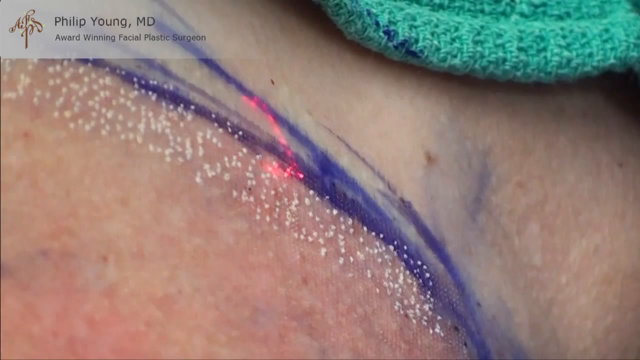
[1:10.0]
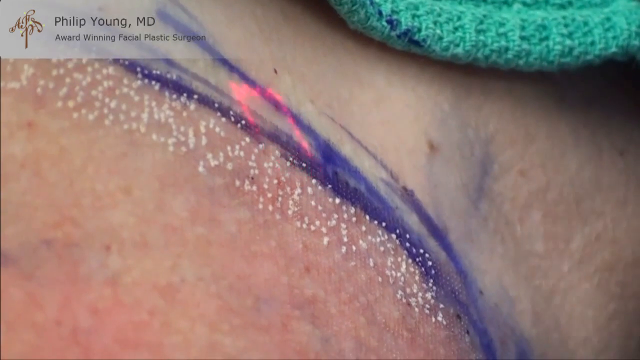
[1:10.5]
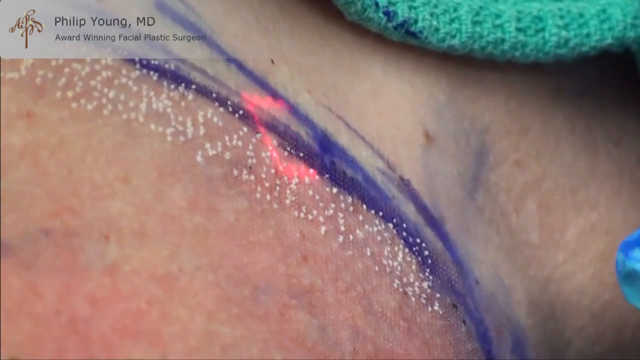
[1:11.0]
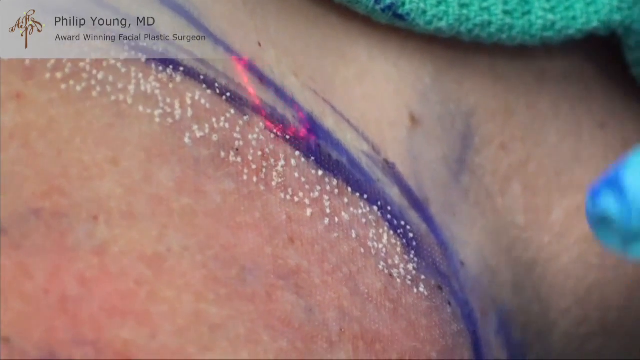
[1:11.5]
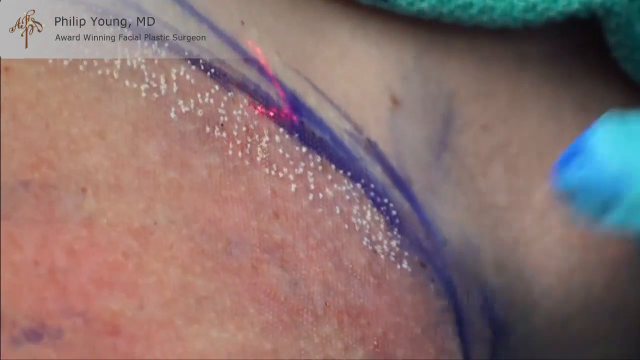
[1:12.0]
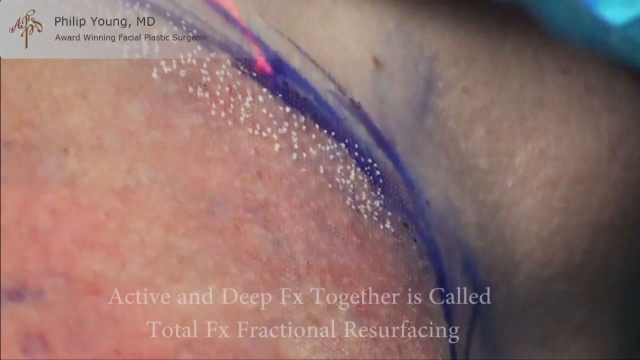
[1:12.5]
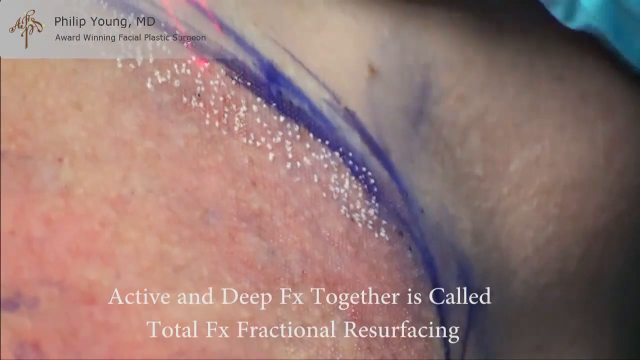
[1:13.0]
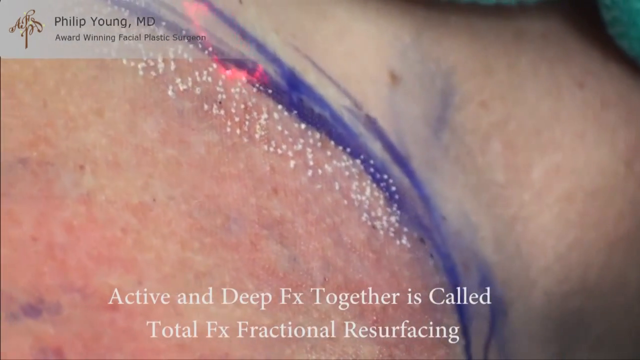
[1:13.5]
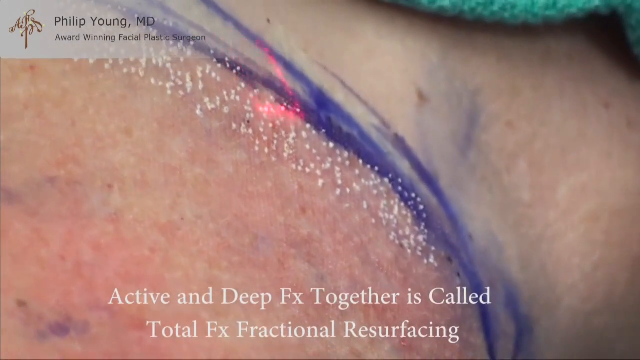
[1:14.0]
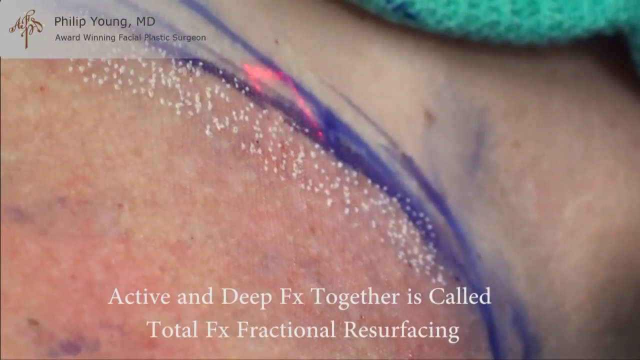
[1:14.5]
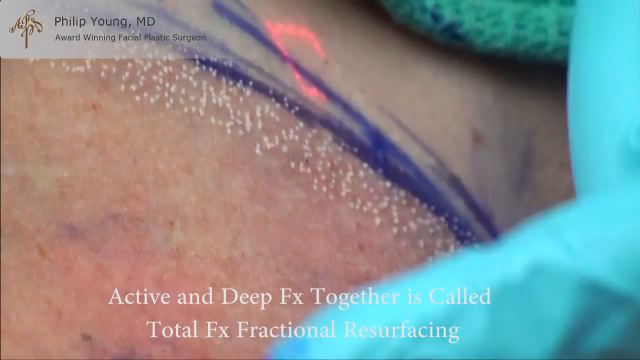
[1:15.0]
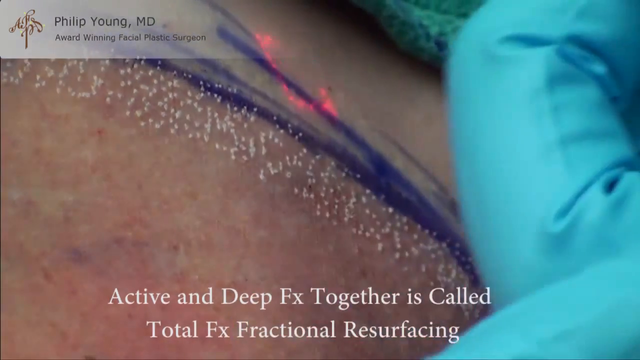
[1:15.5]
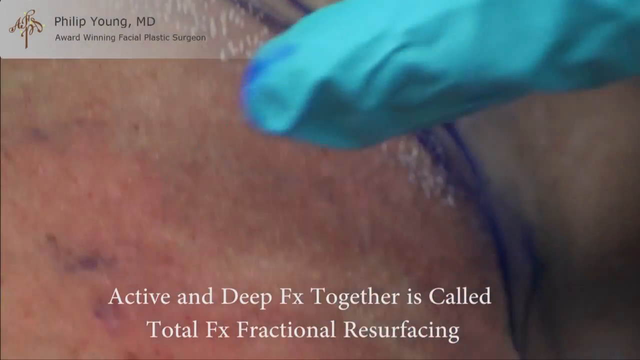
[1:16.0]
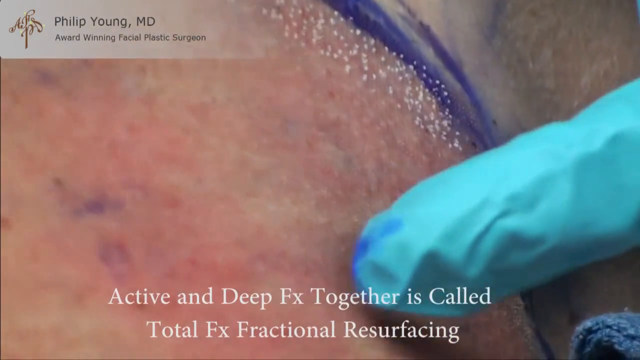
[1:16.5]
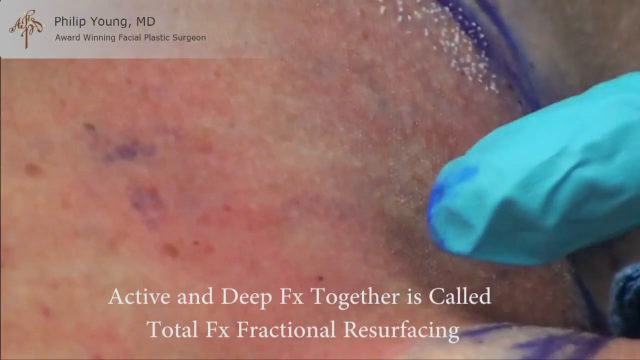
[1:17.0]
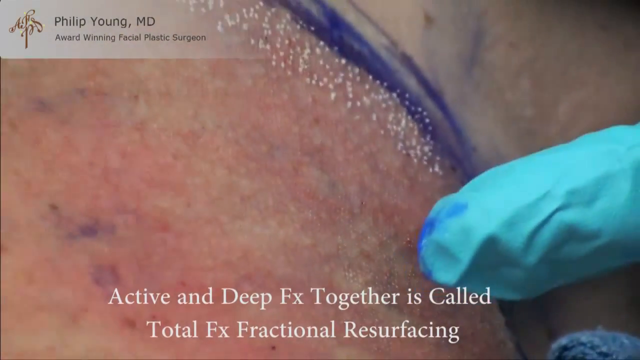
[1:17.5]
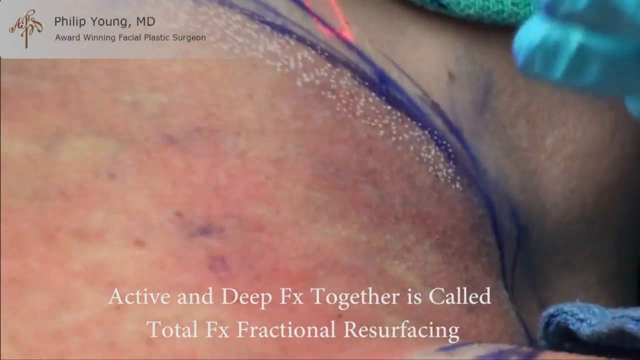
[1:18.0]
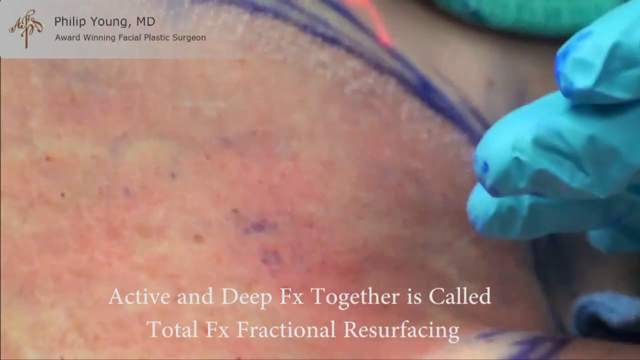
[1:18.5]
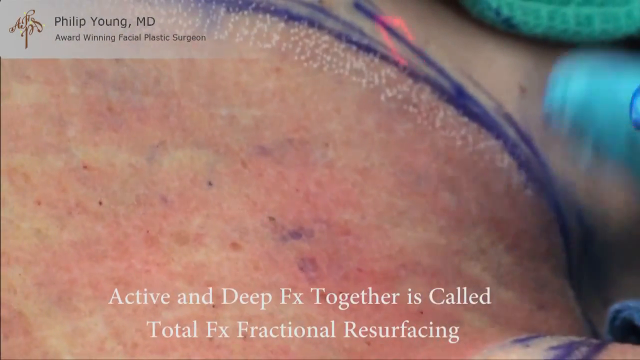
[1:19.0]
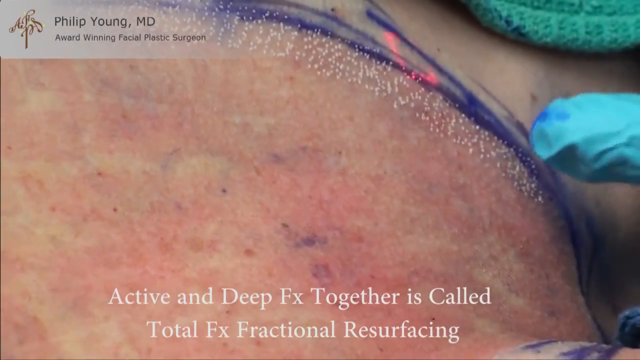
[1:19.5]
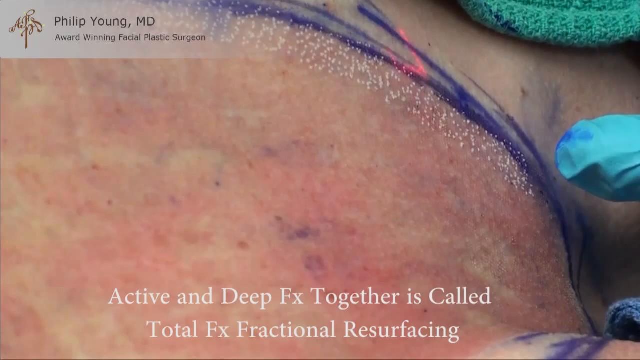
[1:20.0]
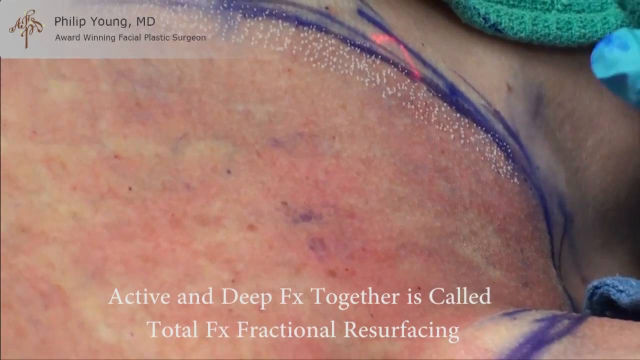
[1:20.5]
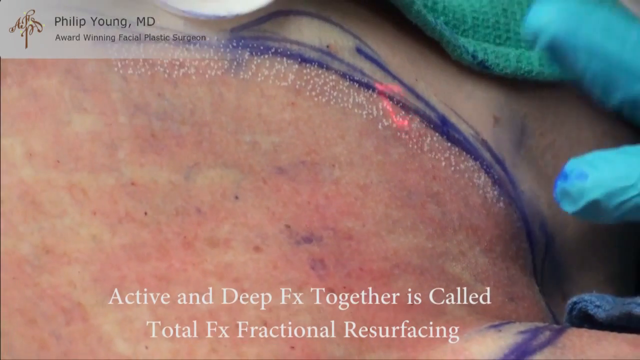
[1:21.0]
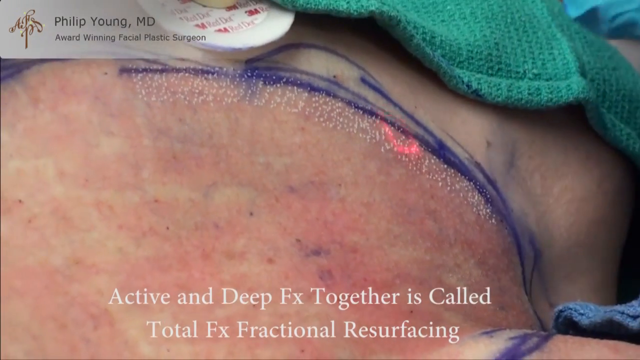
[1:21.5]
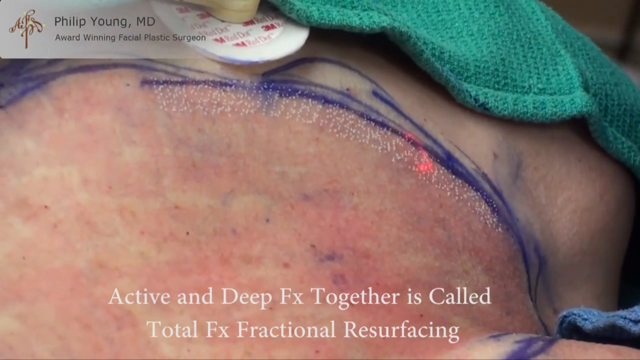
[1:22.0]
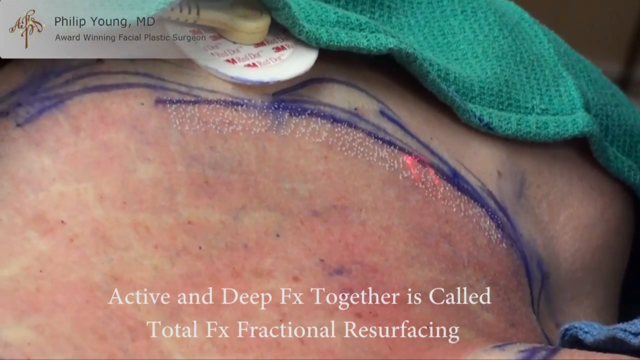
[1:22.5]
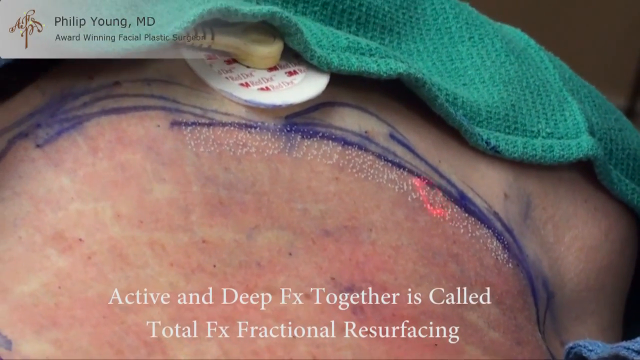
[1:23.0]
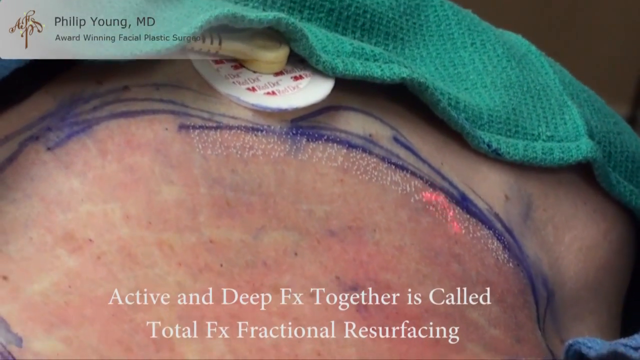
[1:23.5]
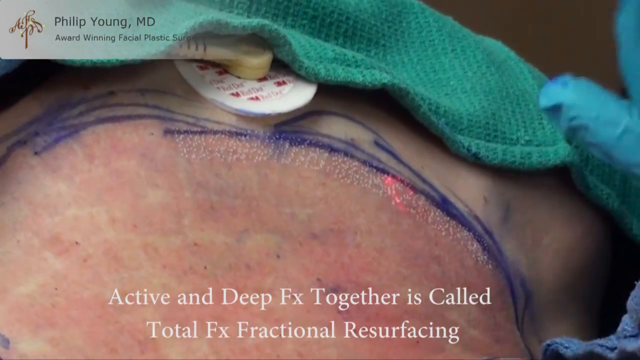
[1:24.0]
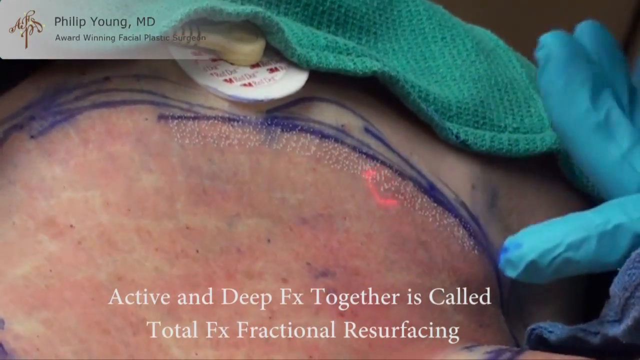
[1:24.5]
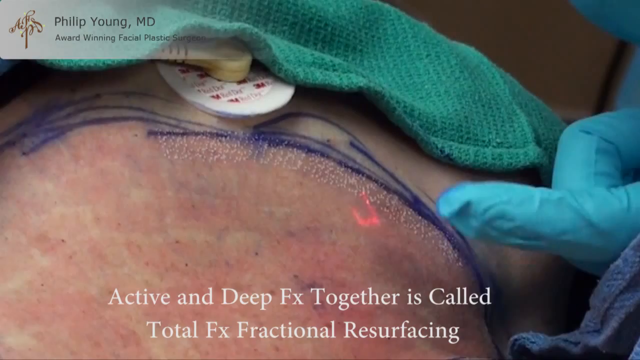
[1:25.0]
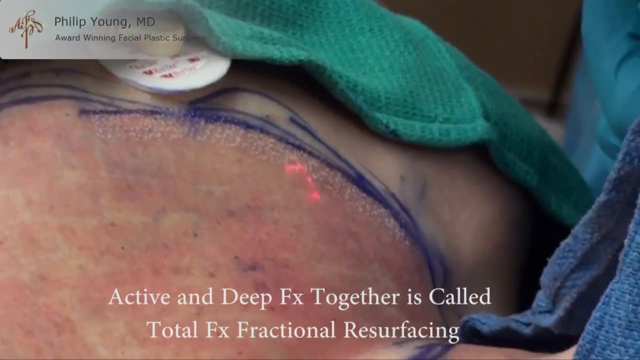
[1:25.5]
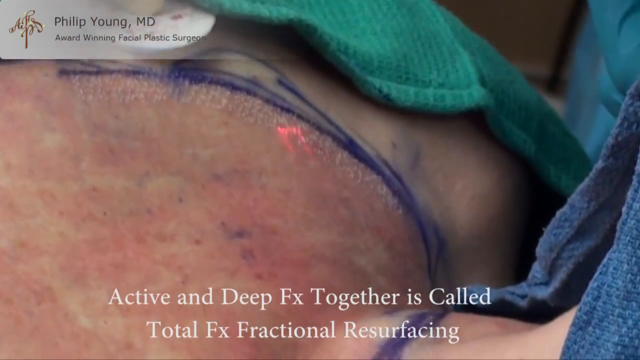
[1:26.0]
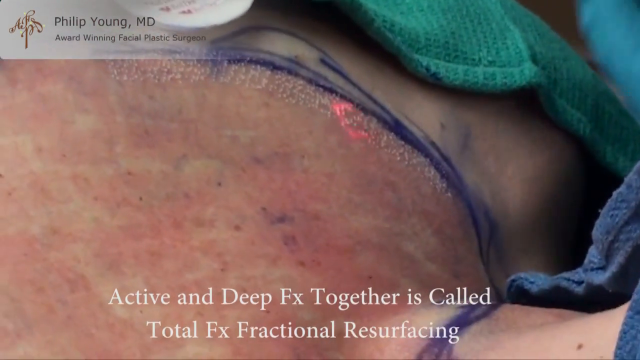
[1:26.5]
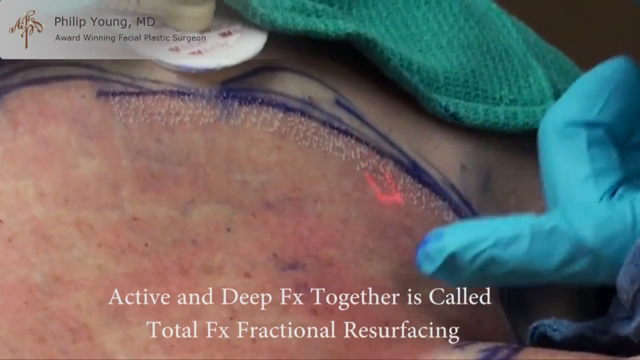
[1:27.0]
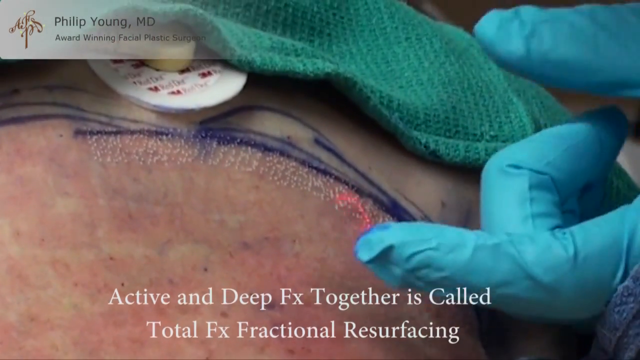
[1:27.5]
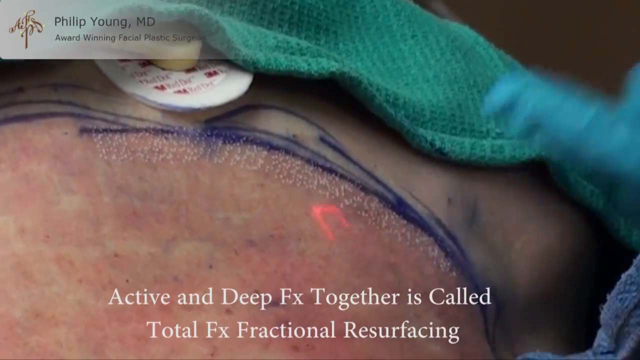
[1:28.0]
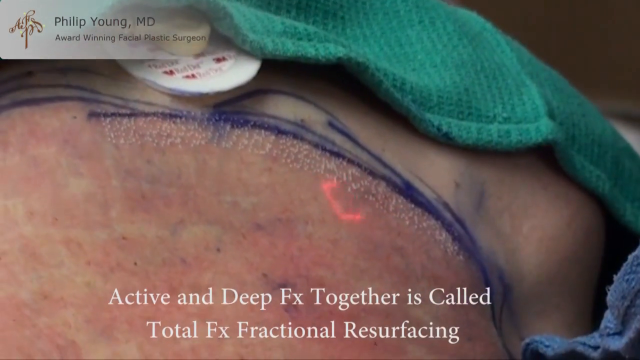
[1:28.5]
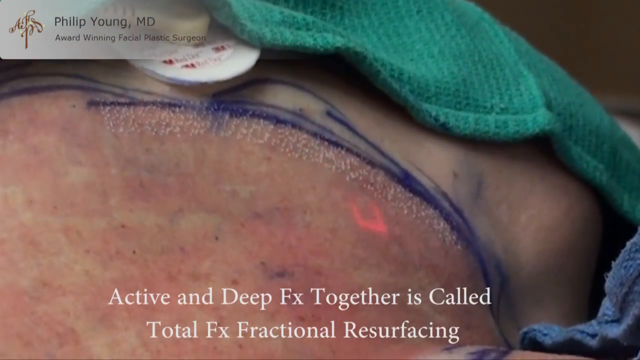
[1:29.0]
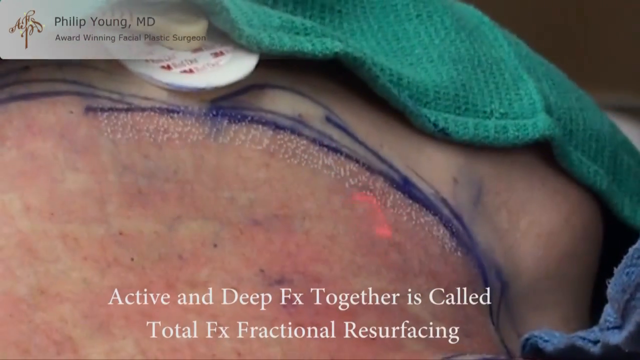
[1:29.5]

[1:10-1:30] A woman is laying down with some blue ink on her skin and a lot of small white dots. A little red laser is in the area. In the top left corner, a white banner with gray text reads "Philip Young MD award winning facial plastic surgeon", and a green rag or towel is in the top right corner. The red laser moves around the dots and the blue ink on the skin. White text then pops up reading "active and deep FX together is called total FX fractional resurfacing". The camera kind of shakes around a bit as the doctor's hands sort of come in and point to the area. The woman's skin shows a lot of red discoloration and dryness. The camera kind of zooms out a bit to show the full section of the woman's body, and the laser continues to kind of hover over the white dots.